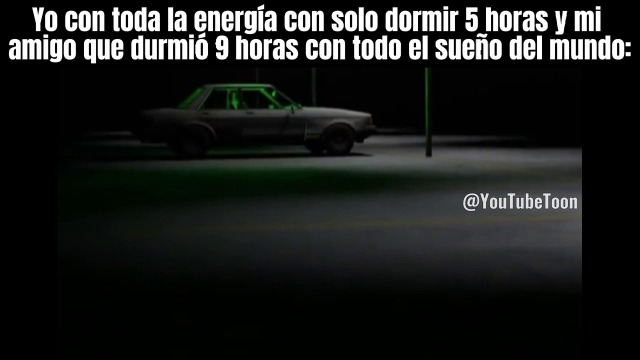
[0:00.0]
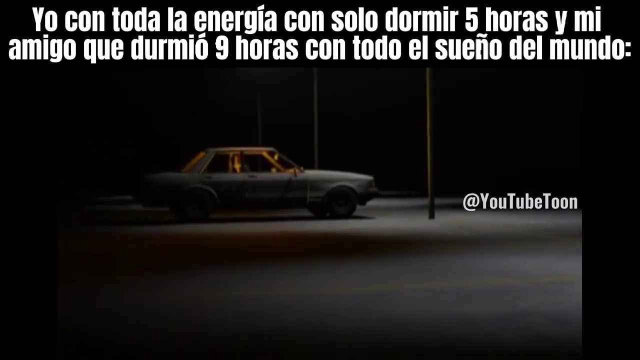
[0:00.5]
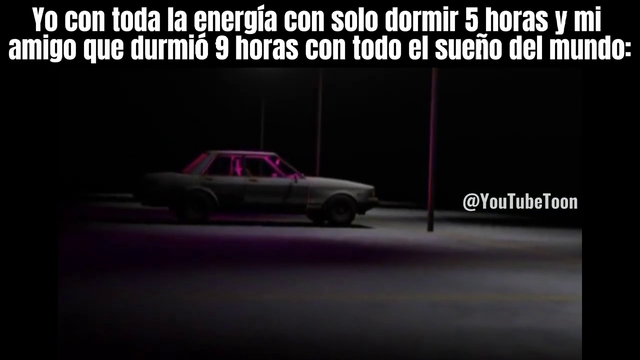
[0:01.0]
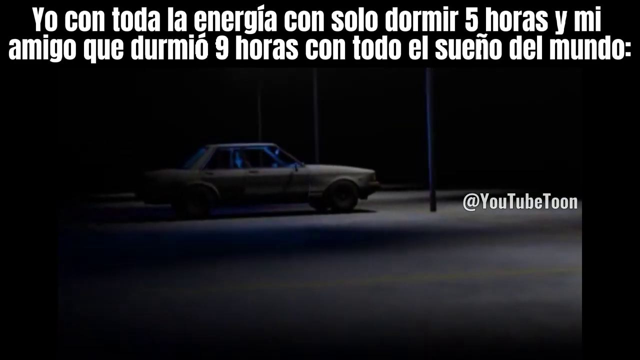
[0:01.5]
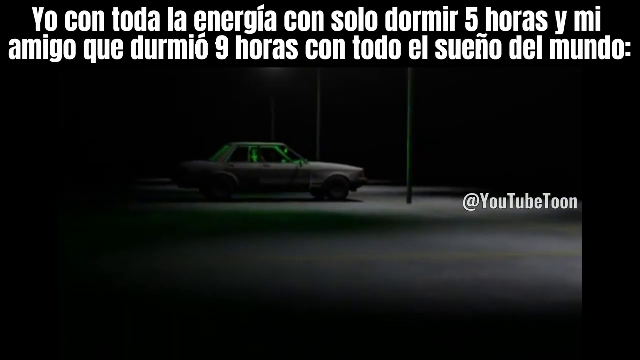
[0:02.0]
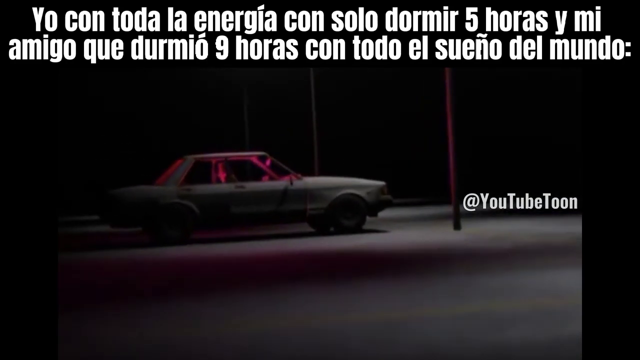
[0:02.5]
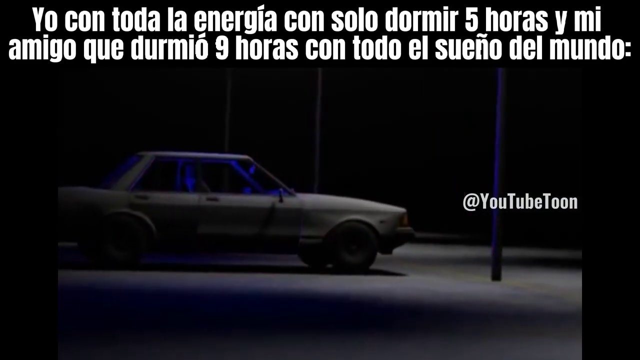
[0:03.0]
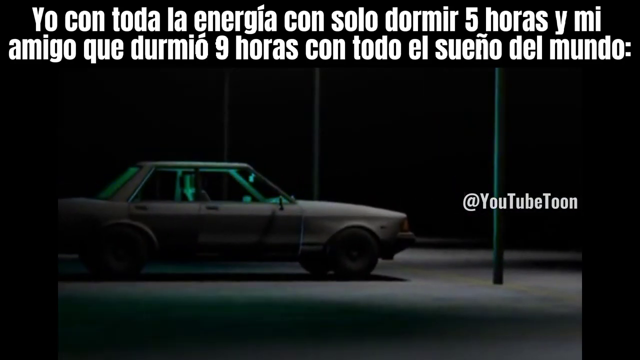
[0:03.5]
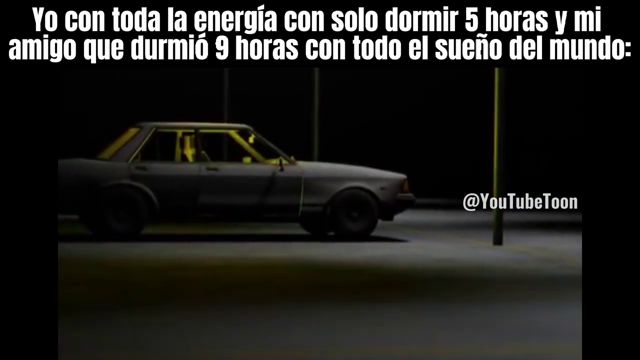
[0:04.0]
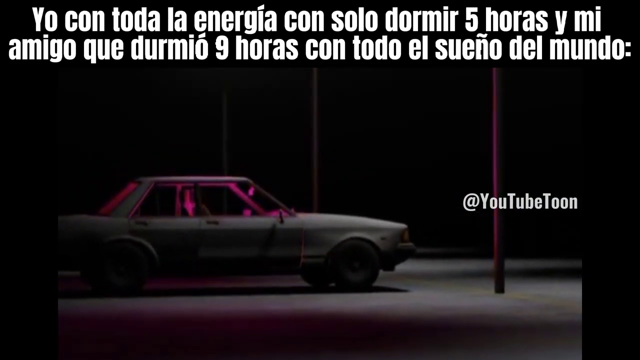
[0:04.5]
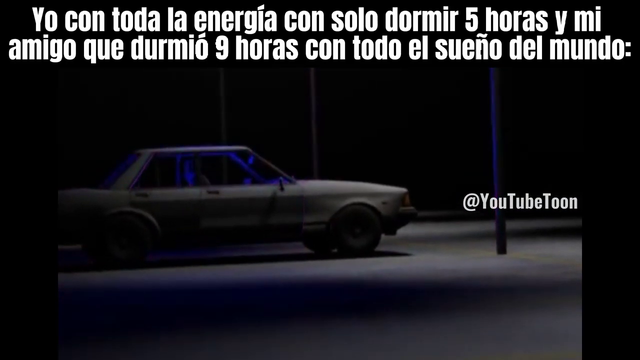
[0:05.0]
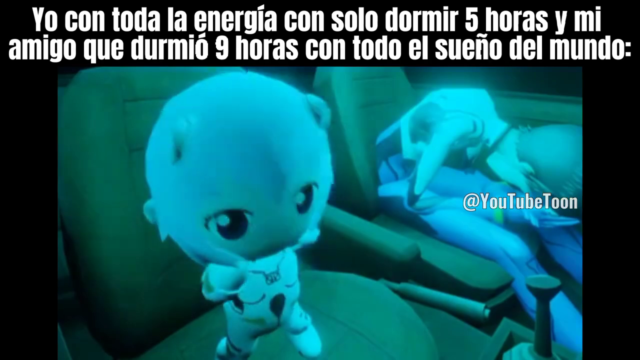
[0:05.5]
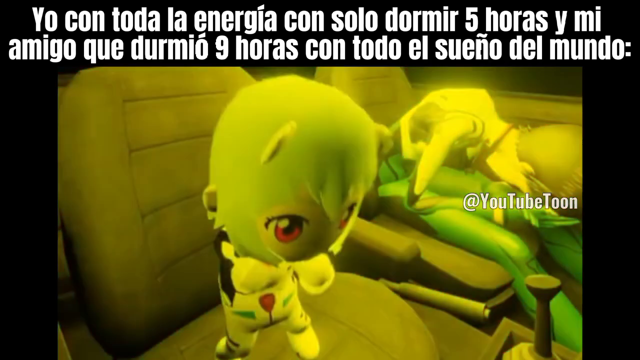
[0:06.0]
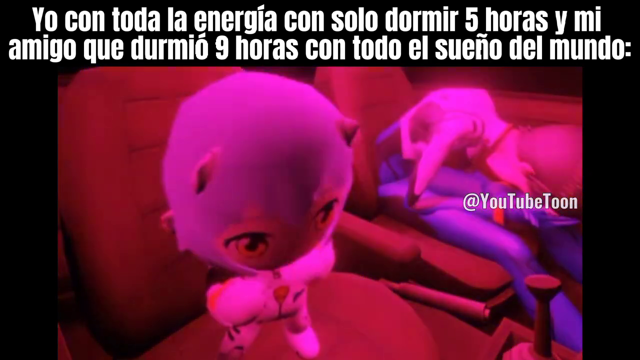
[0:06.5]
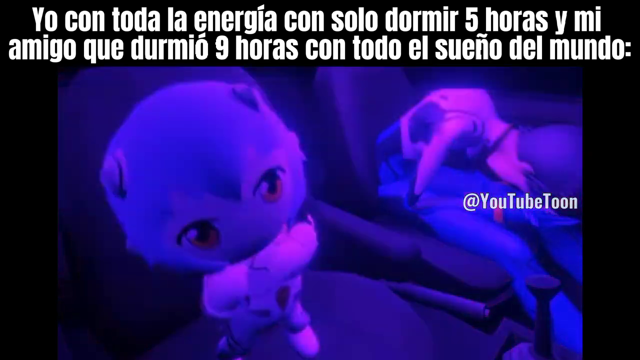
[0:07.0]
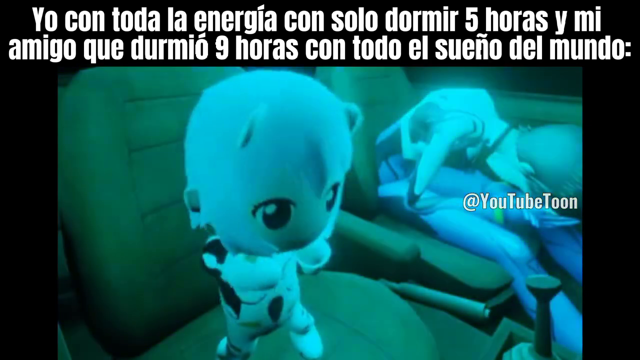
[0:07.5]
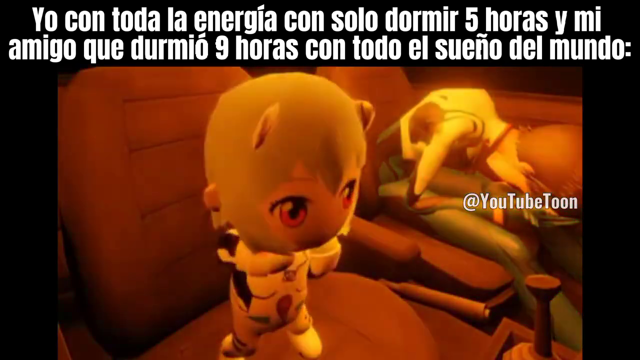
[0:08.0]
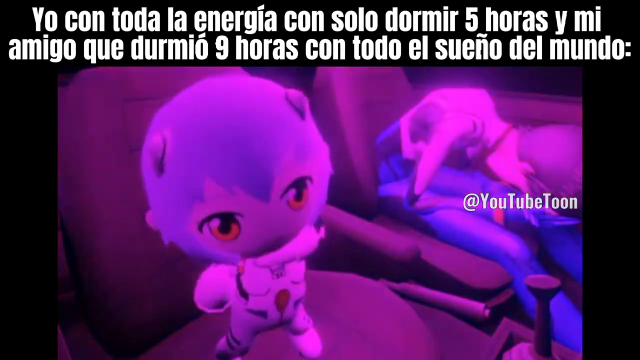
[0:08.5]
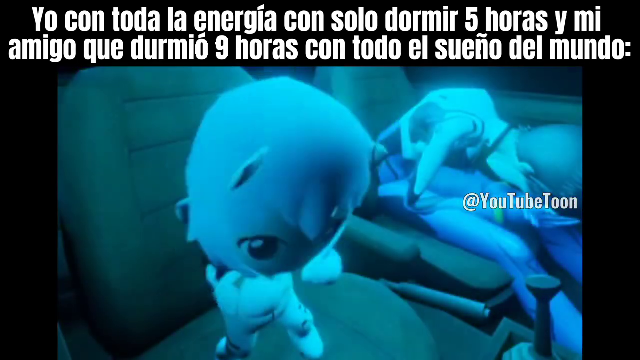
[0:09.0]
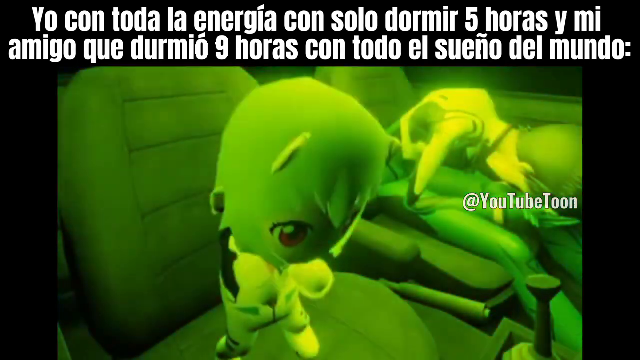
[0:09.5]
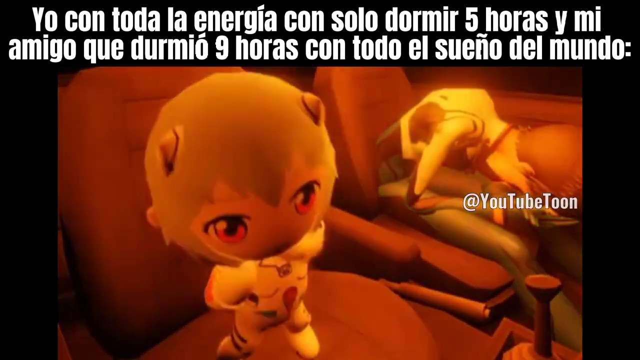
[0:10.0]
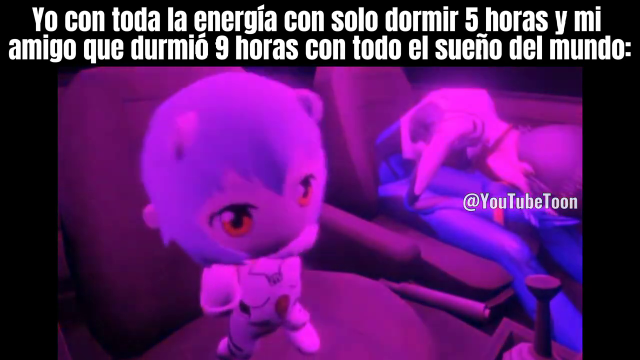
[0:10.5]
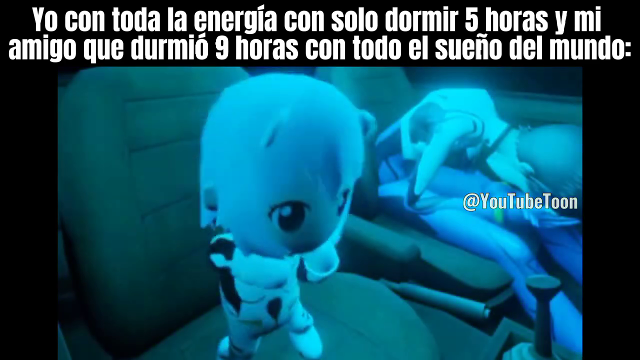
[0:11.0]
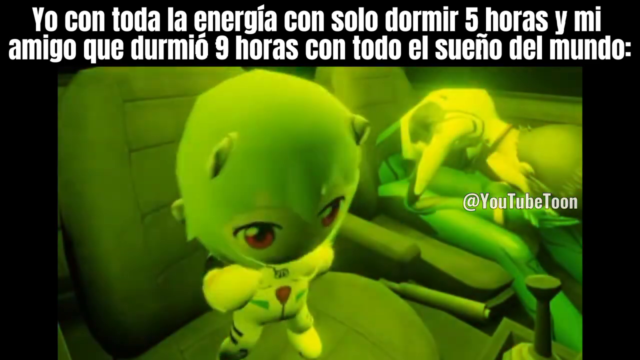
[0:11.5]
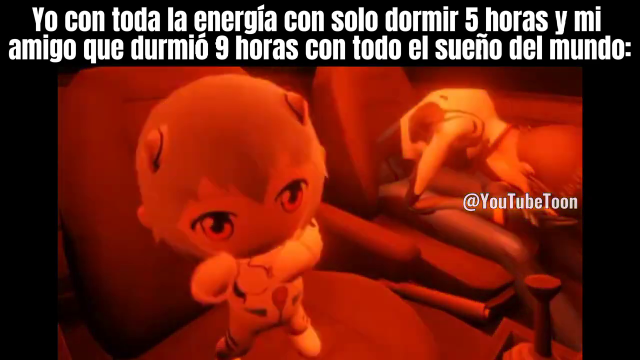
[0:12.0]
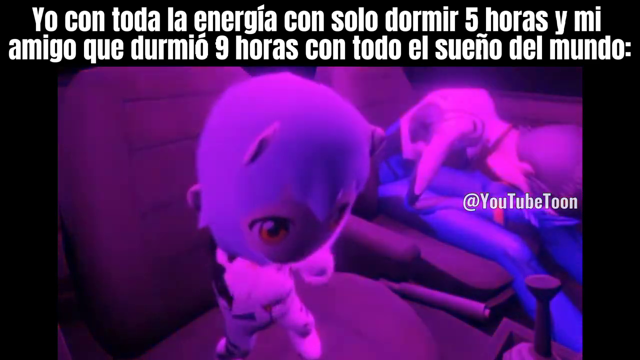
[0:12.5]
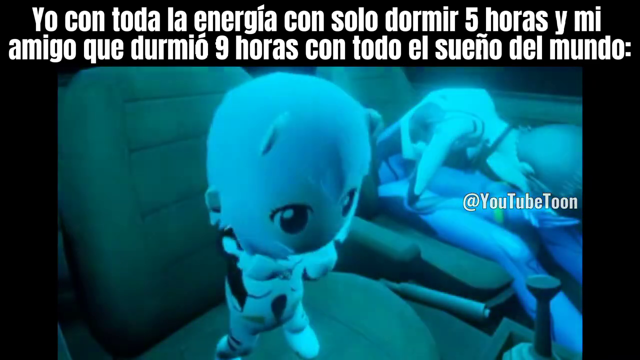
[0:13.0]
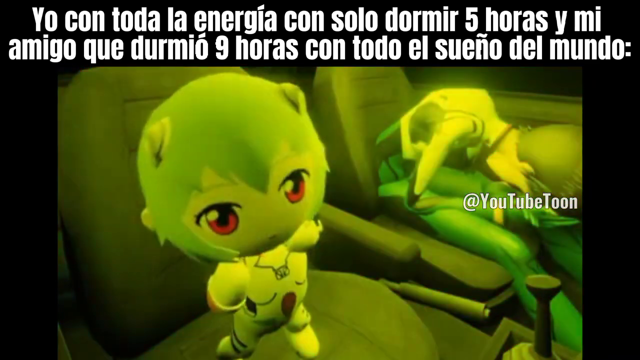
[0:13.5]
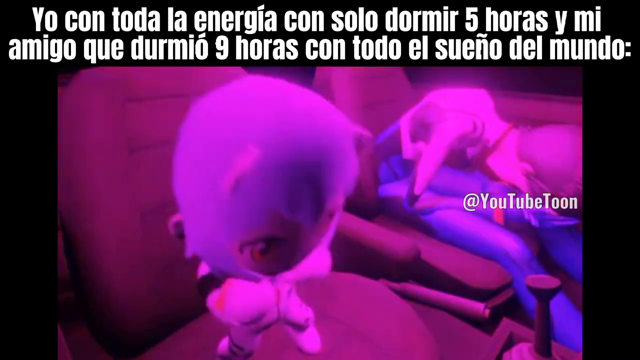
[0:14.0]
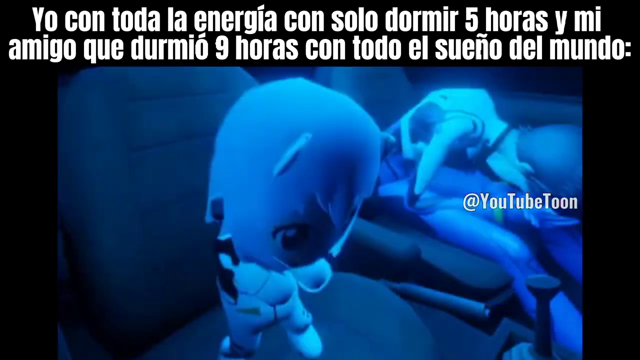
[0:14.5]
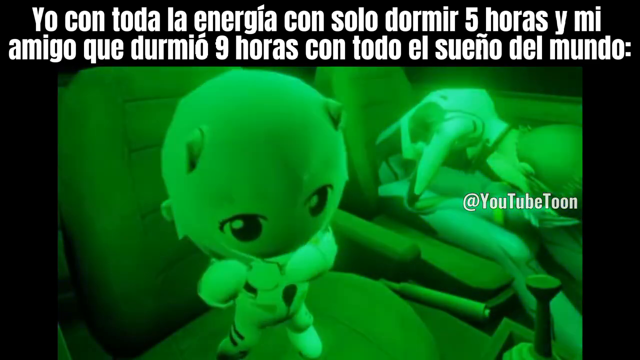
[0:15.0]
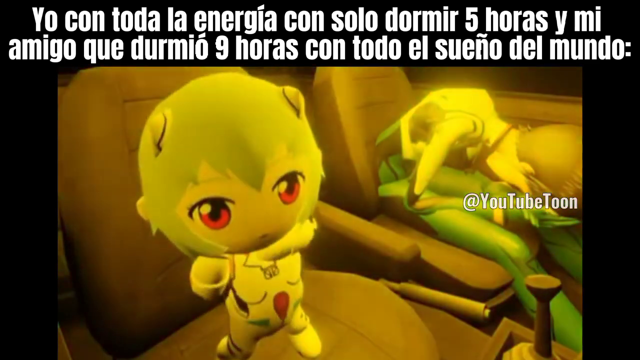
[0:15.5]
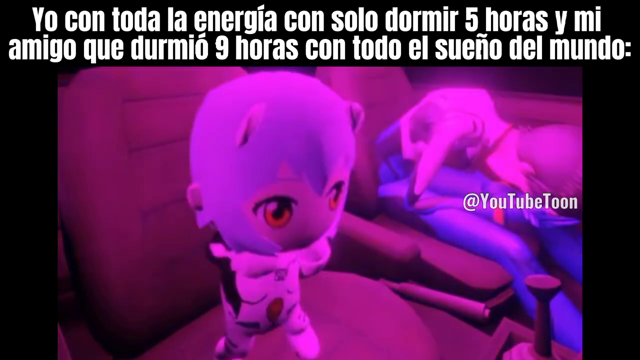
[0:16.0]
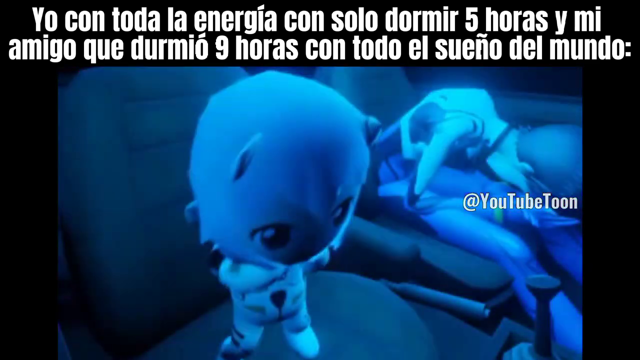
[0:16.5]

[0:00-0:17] A video game scene shows a car in the street. It looks like an older car, like an 80s car: a very blocky-style silver sedan. Some blue glowing lights are visible, there is Spanish text across the top, and white text is overlaid on the screen. The scene then switches to a little anime cat person, a chibi-style anime character with red eyes and light blue hair, dancing inside the car and standing on top of the car. Club lights strobe in different colors inside the car. A fully sized character is next to them in the background and appears to be keeled over and passed out. On the right, a YouTube handle reads "at YouTubetoon." Mostly the chibi character dances in the car as if inside a nightclub while the colors flash and strobe.